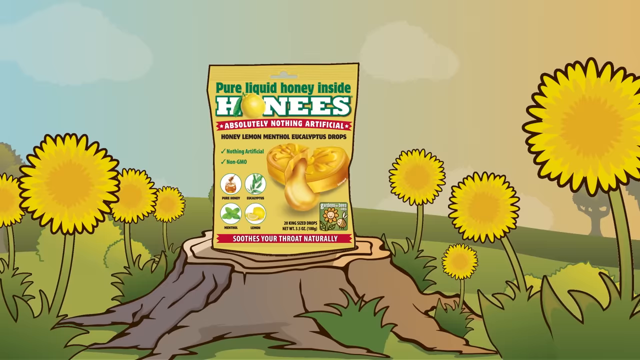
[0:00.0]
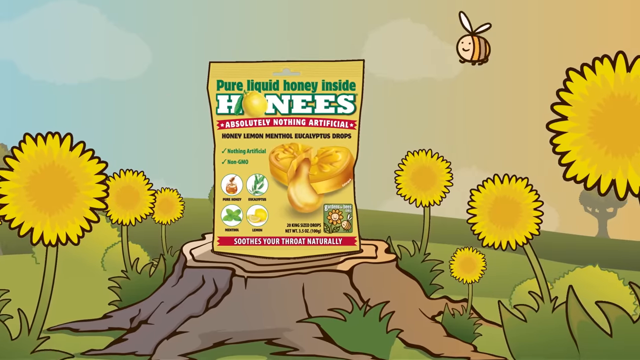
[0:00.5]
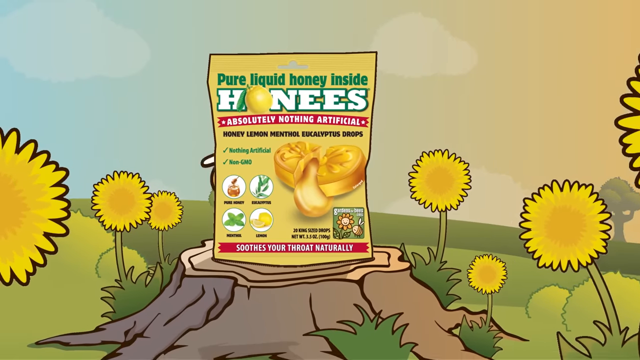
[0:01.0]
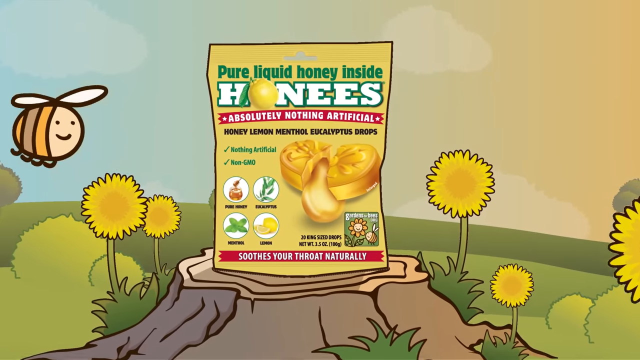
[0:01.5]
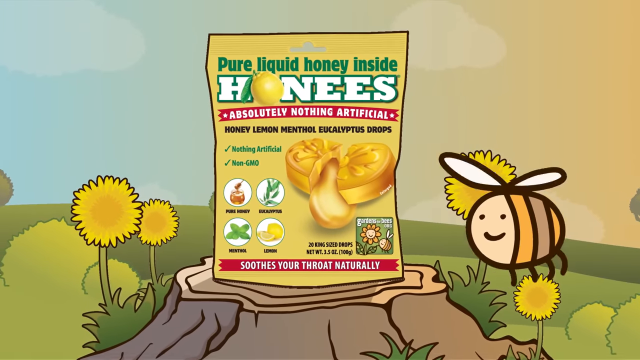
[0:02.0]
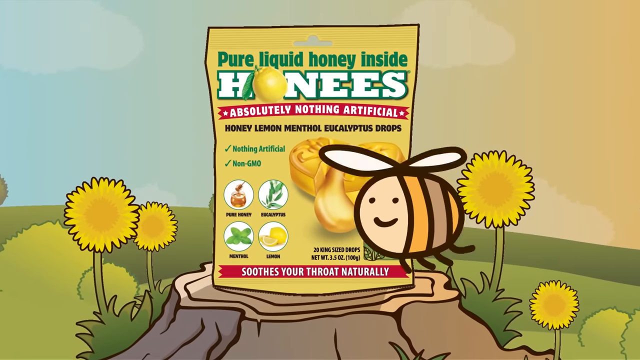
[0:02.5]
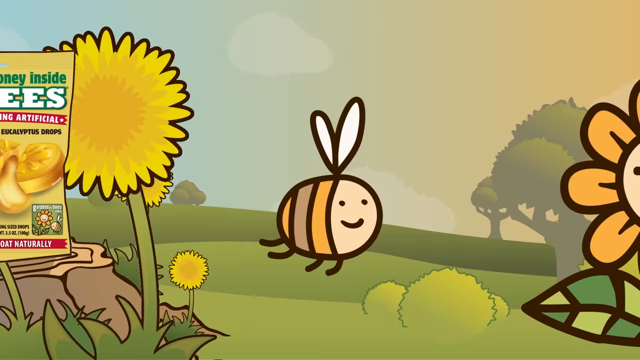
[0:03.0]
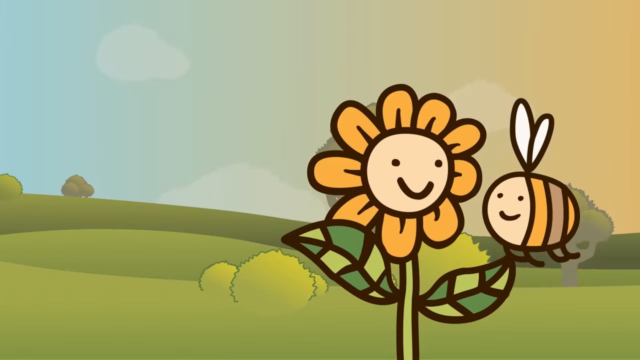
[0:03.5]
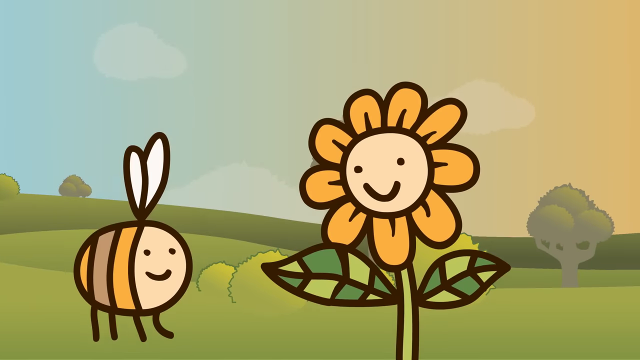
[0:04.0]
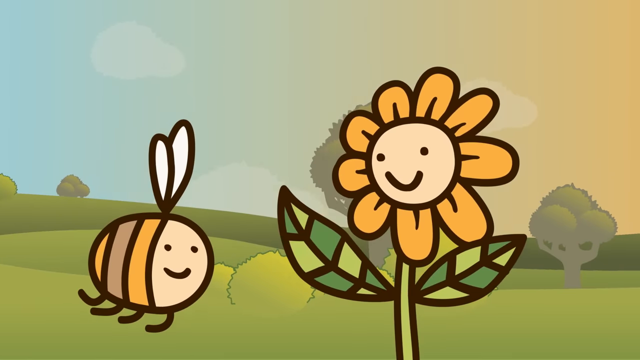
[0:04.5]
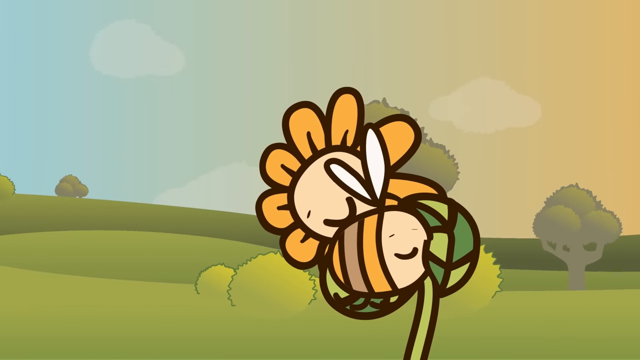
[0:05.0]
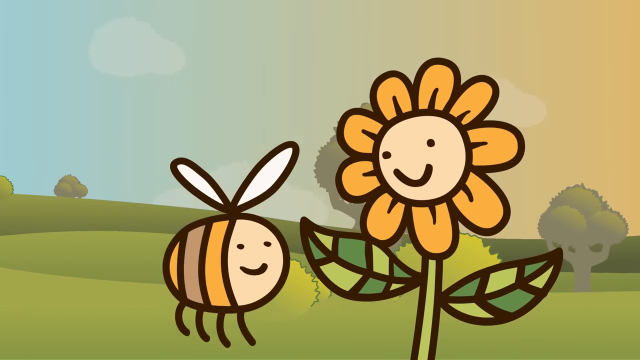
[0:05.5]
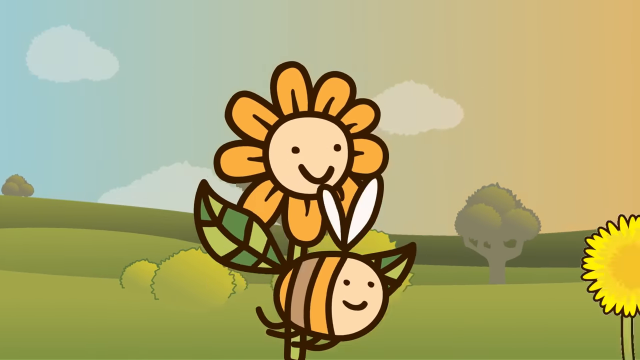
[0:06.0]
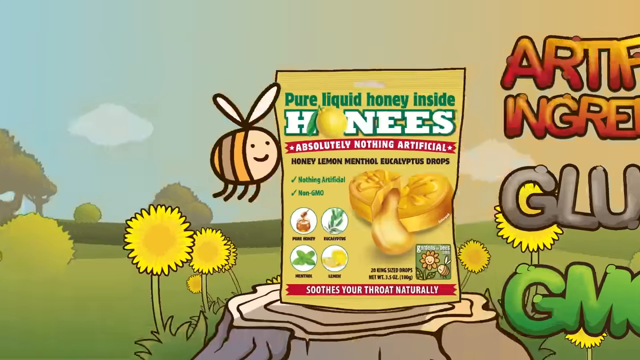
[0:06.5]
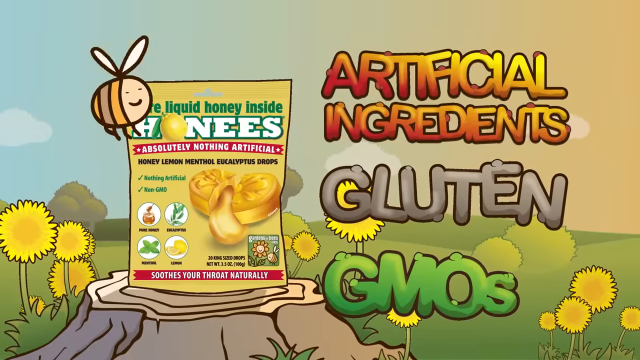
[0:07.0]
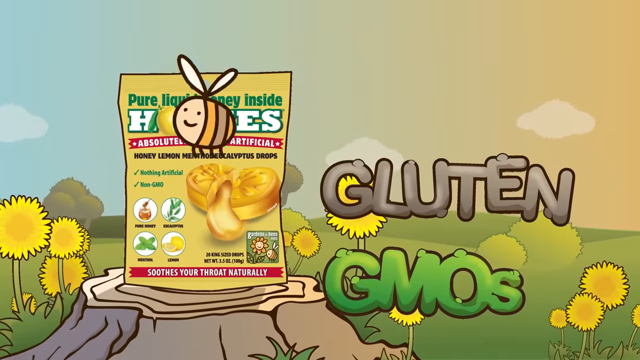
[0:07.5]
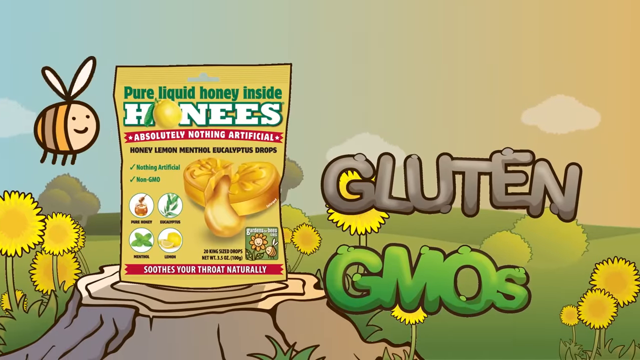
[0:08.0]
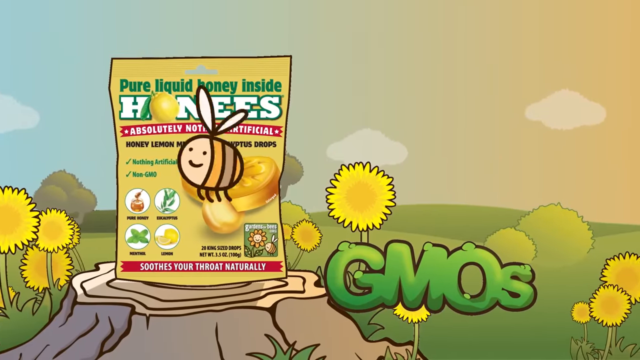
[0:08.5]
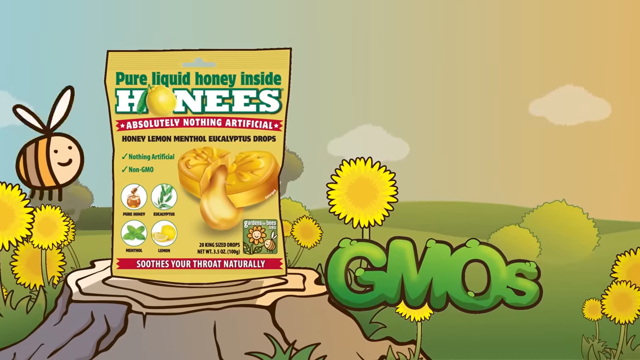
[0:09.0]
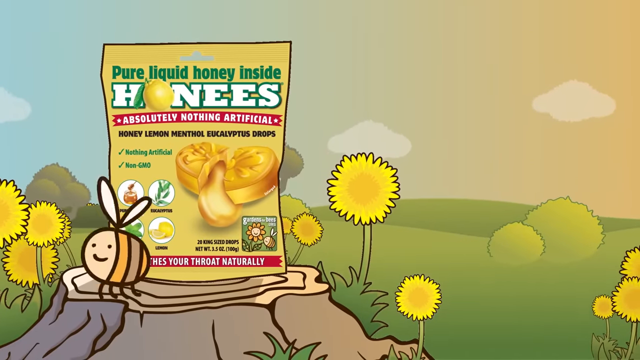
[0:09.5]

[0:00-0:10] The video appears to be an ad for honey lemon menthol eucalyptus drops with pure liquid honey inside and absolutely nothing artificial. In a fairly simple animation, a honeybee kind of buzzes around, and sunflowers show off the product. The honeybee and a sunflower hug each other. On-screen text then states that there is no gluten, no GMOs and no artificial flavors. The entire video is an animation.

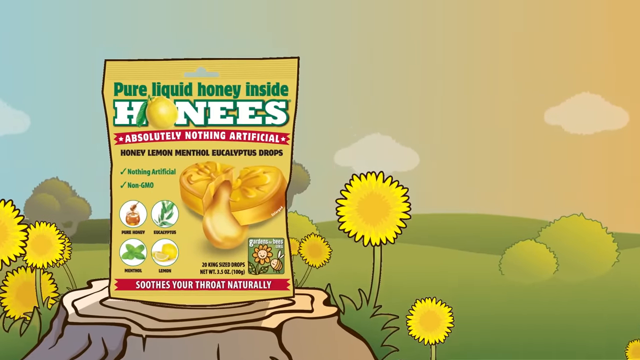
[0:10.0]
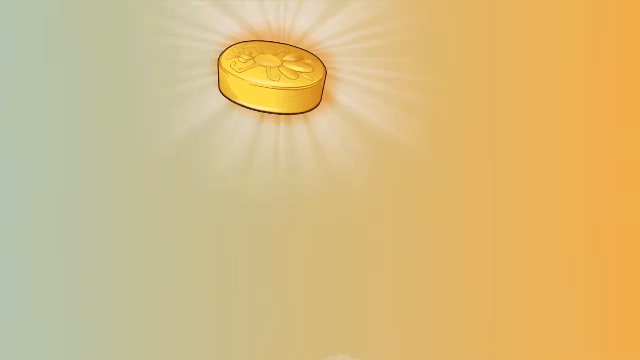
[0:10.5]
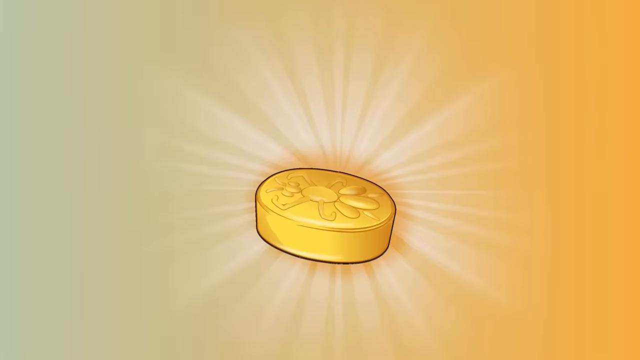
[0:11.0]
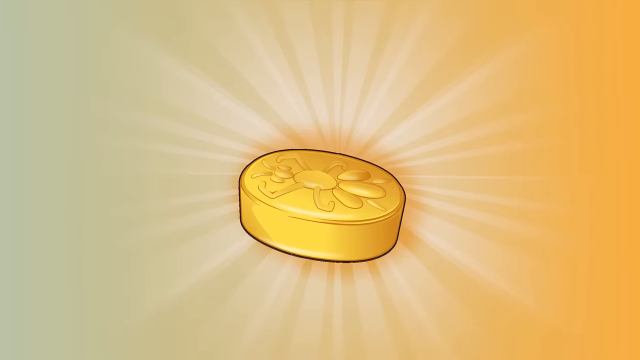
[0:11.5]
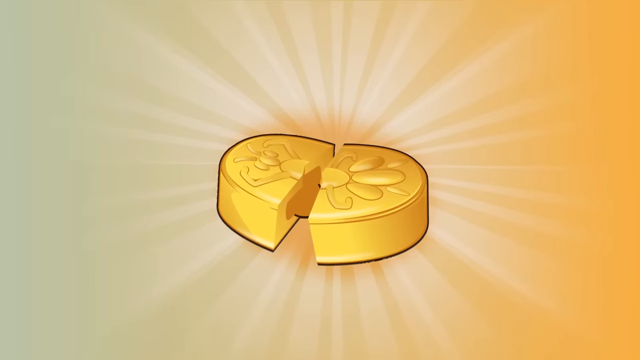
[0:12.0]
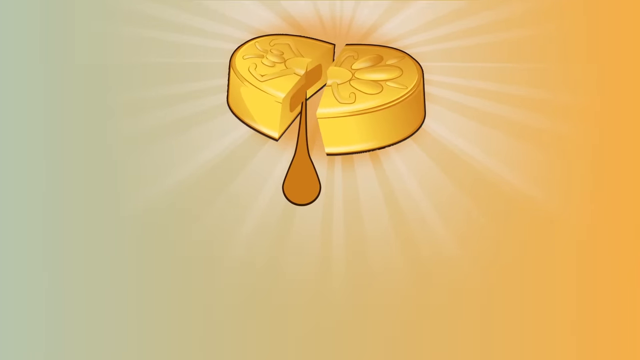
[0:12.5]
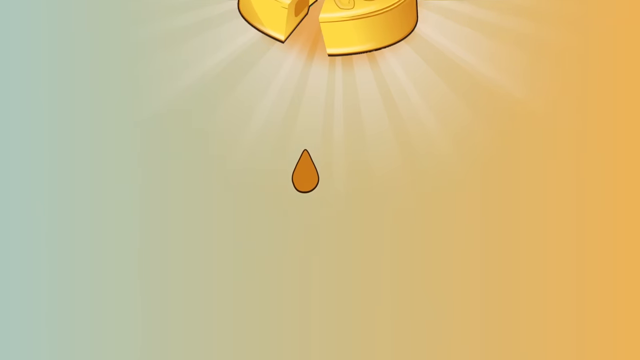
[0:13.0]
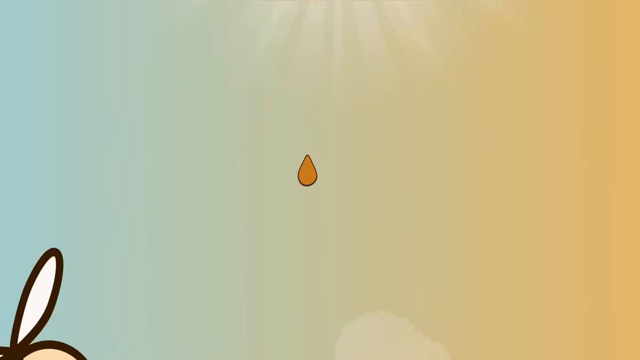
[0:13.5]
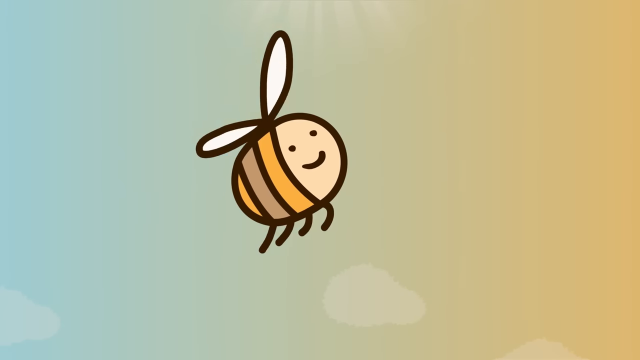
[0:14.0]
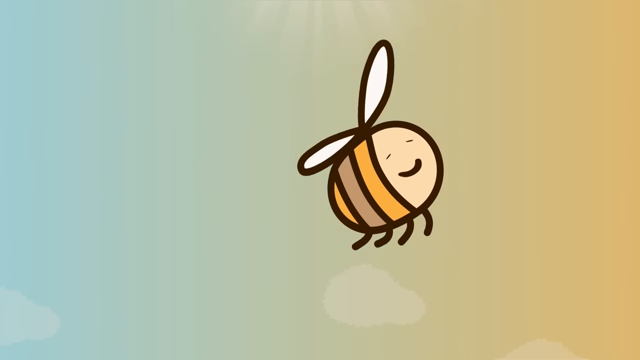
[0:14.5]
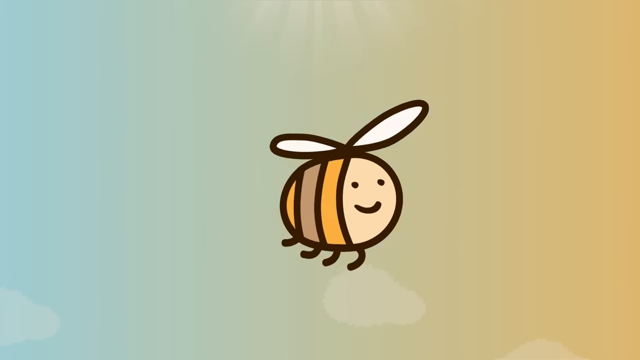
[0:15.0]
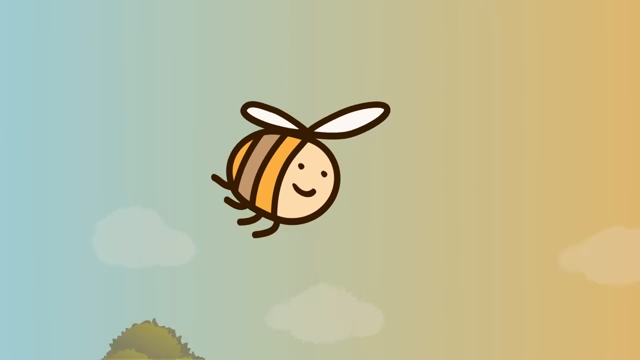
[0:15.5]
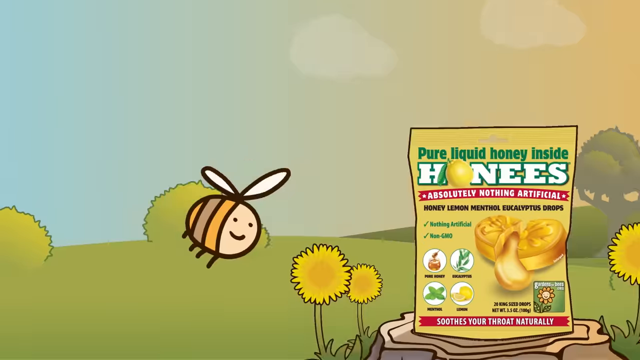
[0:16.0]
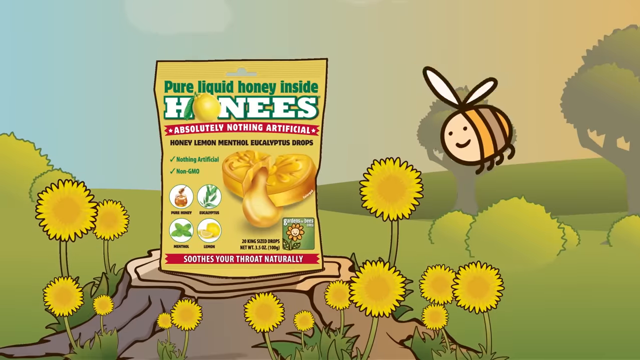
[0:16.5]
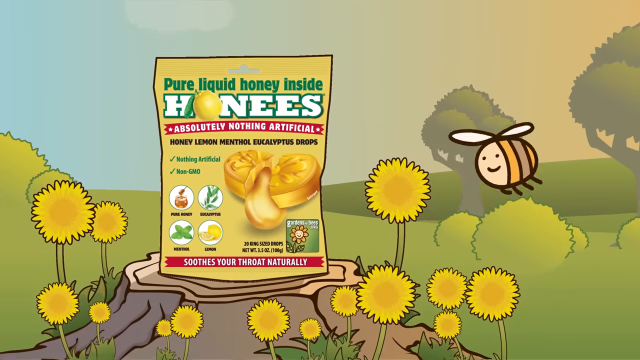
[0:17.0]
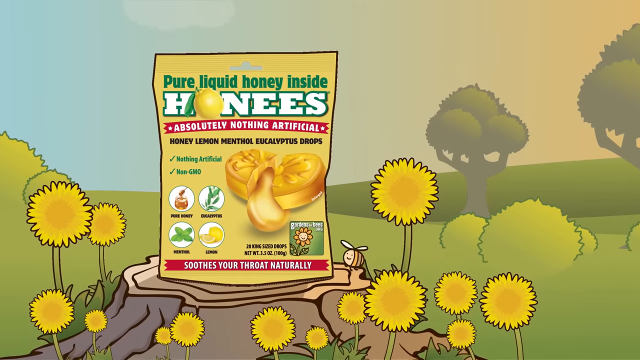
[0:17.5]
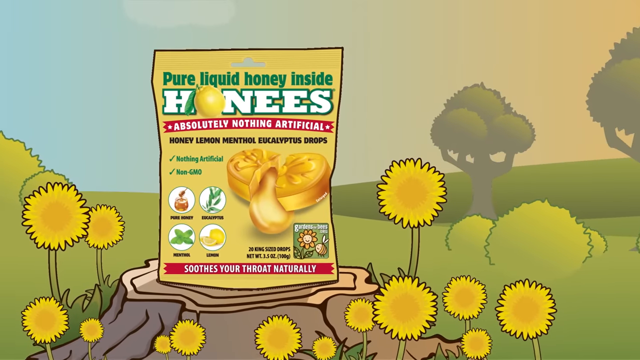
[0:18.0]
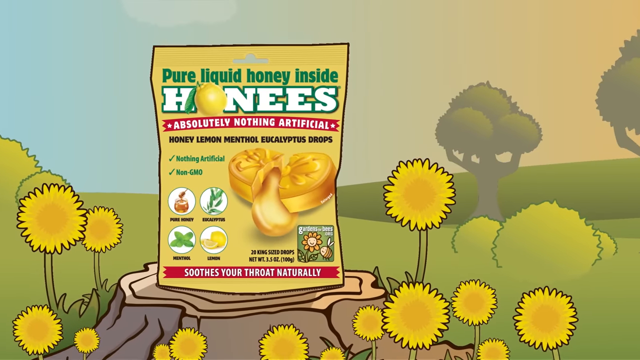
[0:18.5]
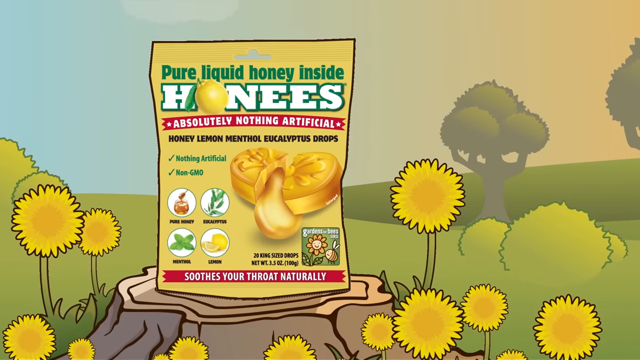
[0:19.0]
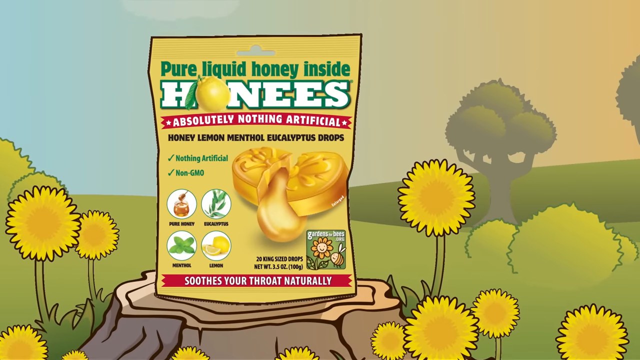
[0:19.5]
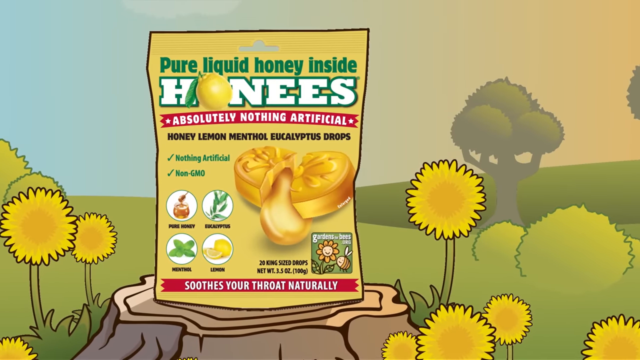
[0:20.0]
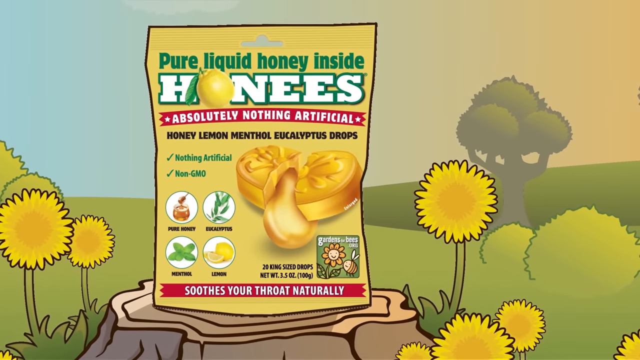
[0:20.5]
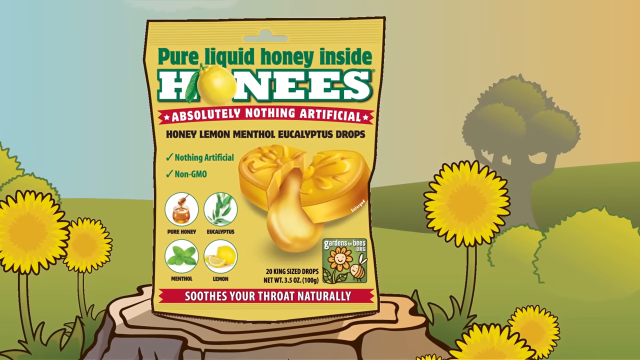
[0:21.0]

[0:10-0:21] The view pans to the sky, where one of the honey tablets is kind of in the sky. It breaks apart, and something like sunshine comes from it. A drop of honey kind of drips from the sky into the mouth of a little animated bee with a smiley face. With a little honey in its mouth, the smiling bee buzzes around the product once again, and then the video cuts.